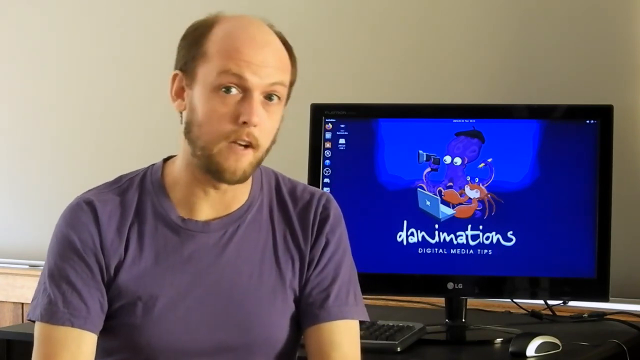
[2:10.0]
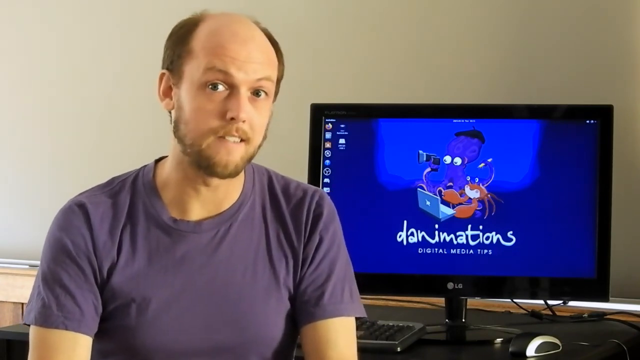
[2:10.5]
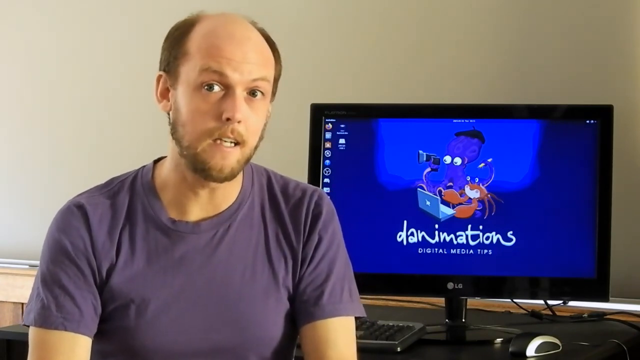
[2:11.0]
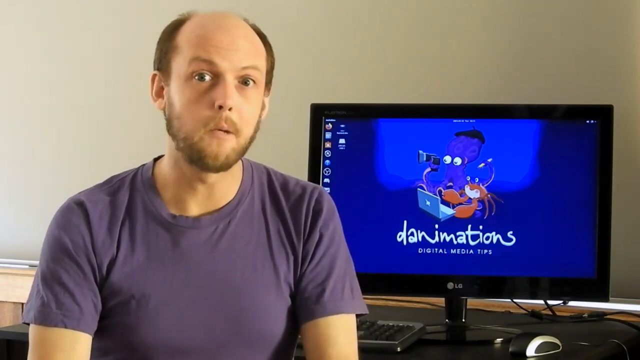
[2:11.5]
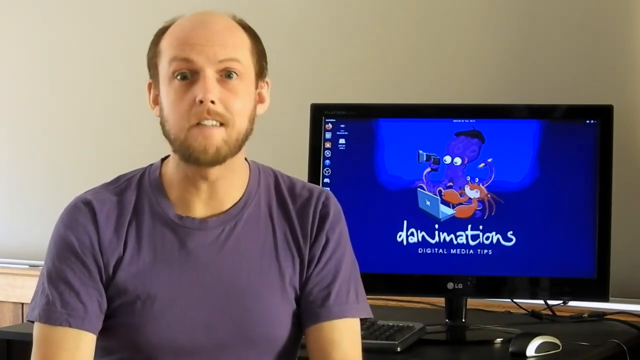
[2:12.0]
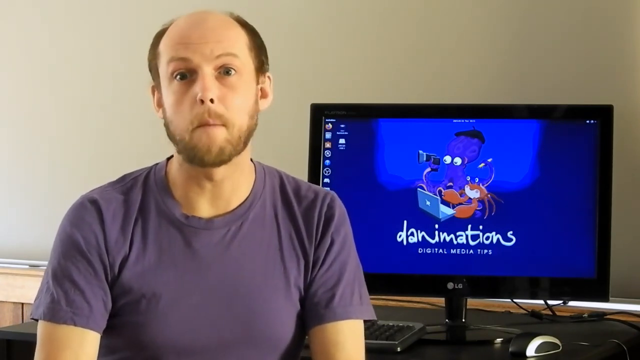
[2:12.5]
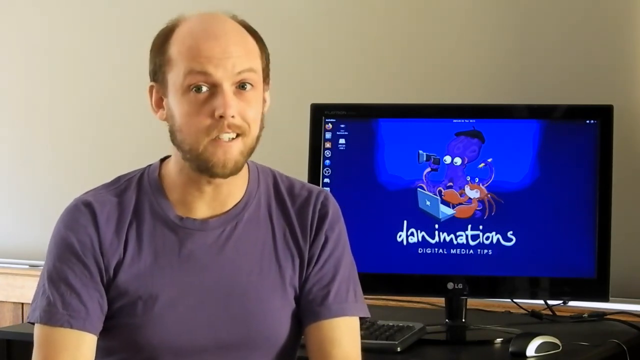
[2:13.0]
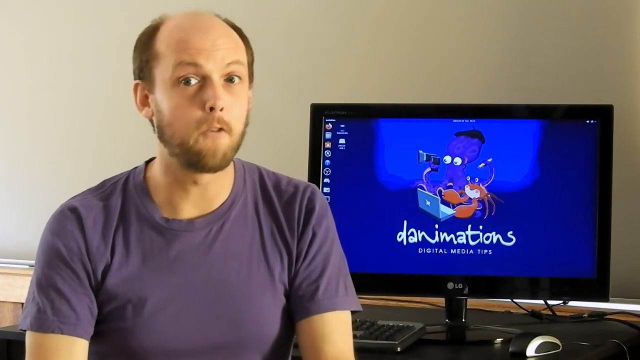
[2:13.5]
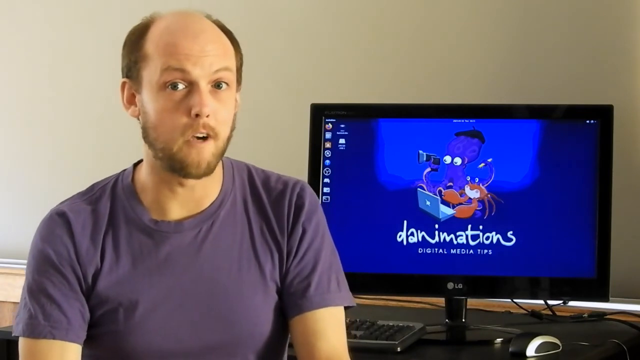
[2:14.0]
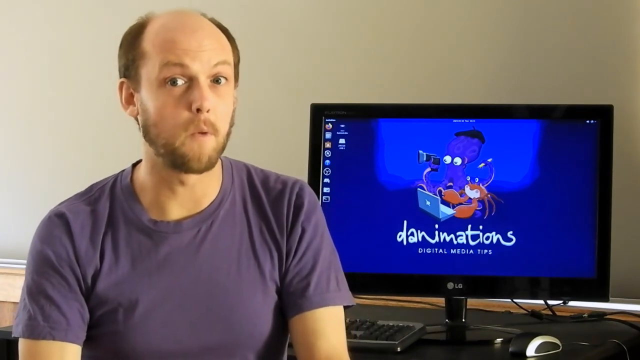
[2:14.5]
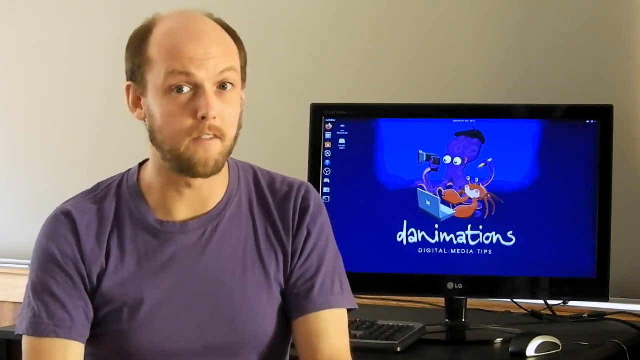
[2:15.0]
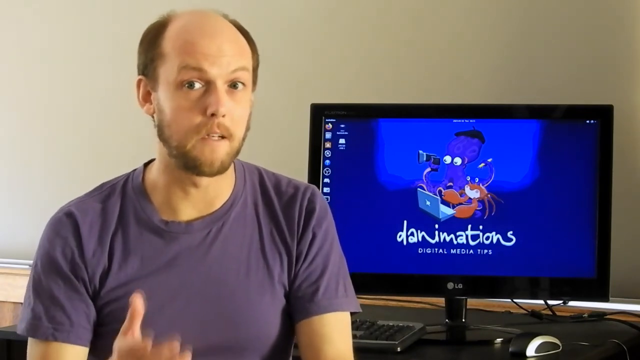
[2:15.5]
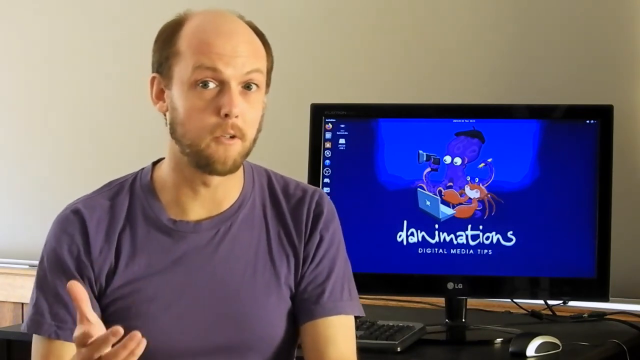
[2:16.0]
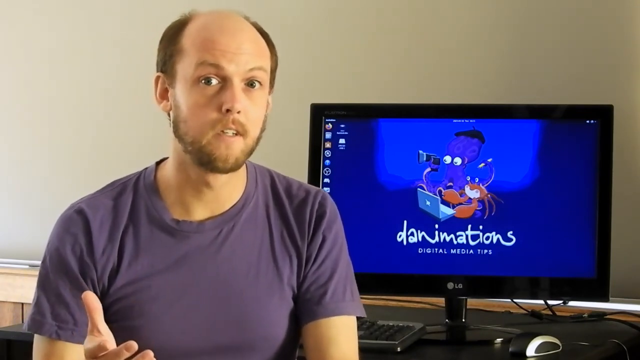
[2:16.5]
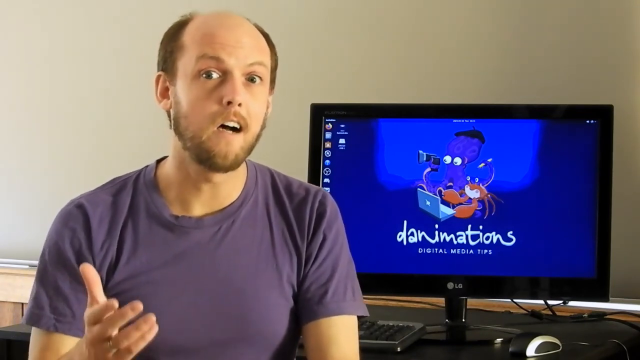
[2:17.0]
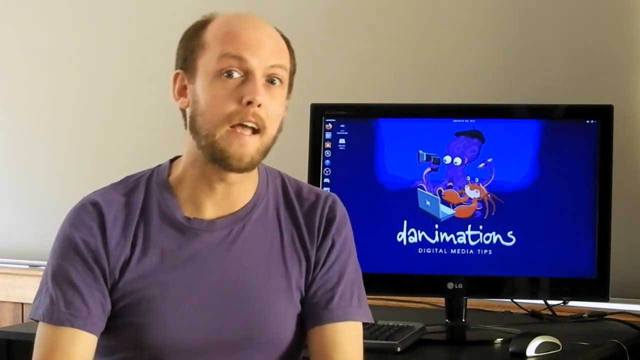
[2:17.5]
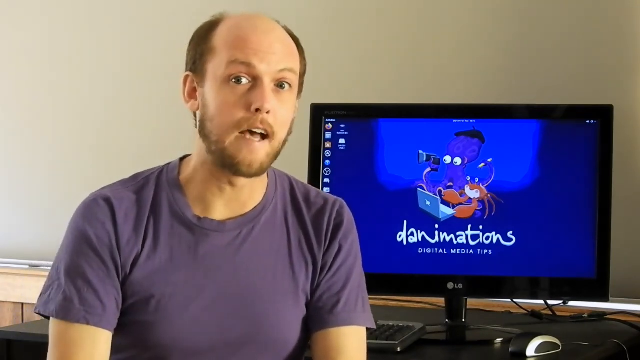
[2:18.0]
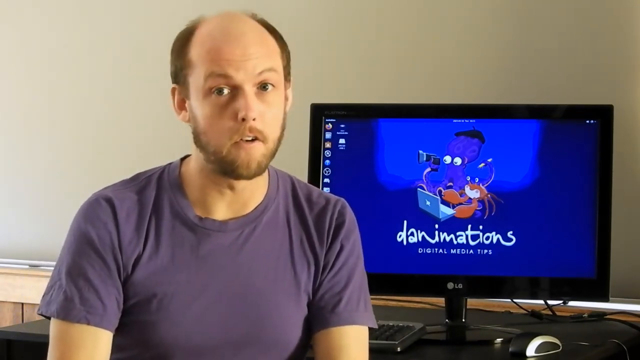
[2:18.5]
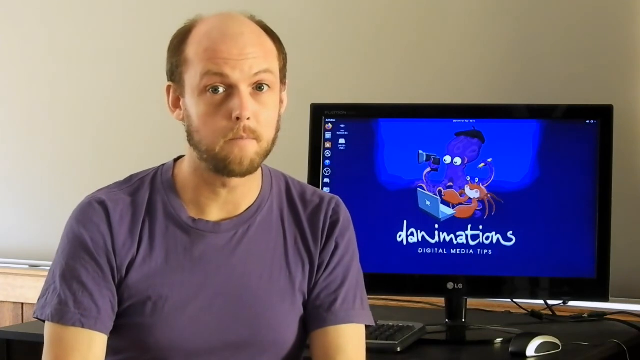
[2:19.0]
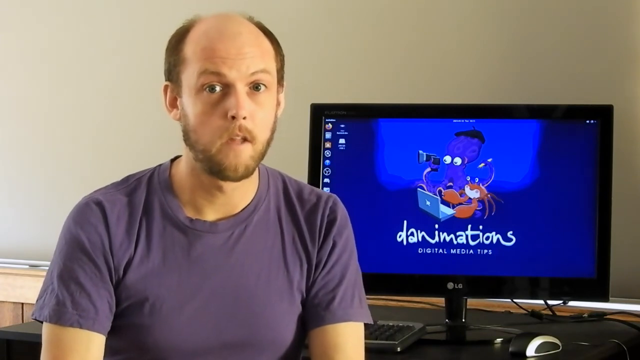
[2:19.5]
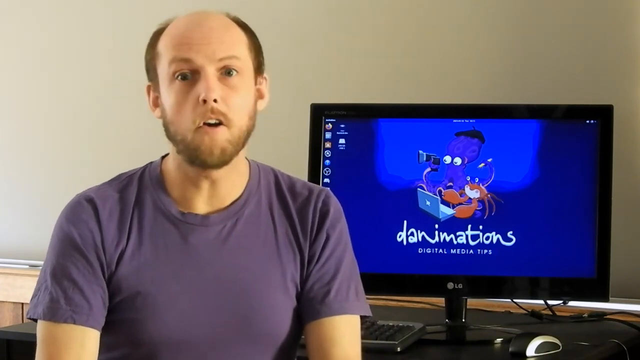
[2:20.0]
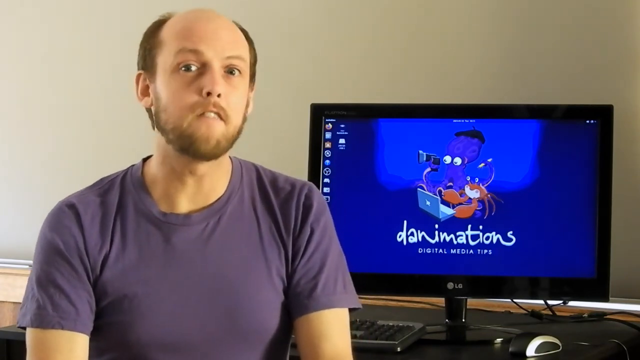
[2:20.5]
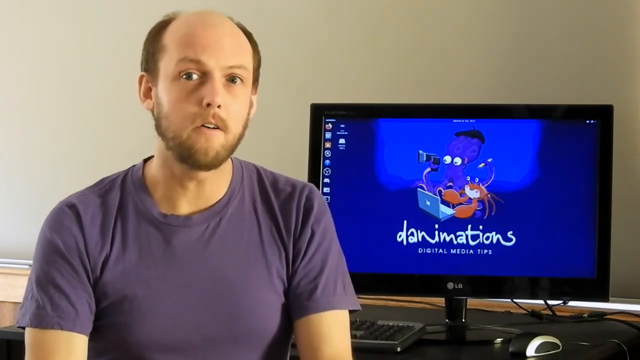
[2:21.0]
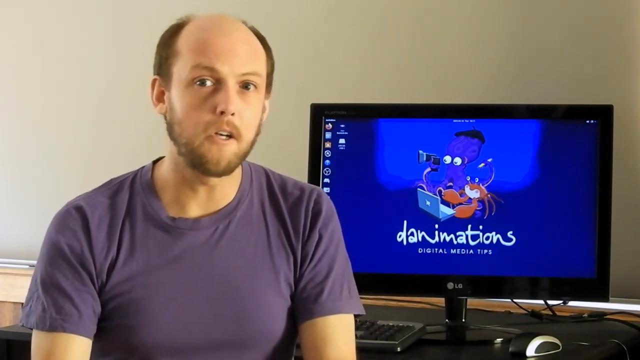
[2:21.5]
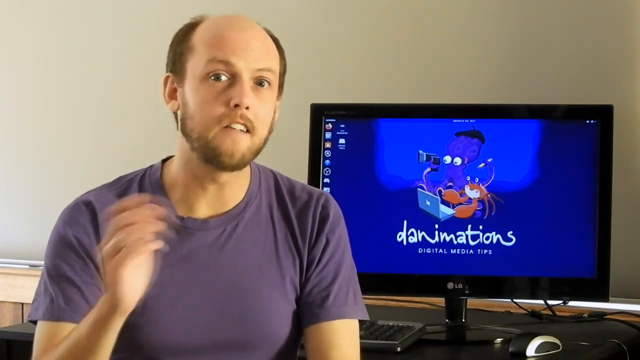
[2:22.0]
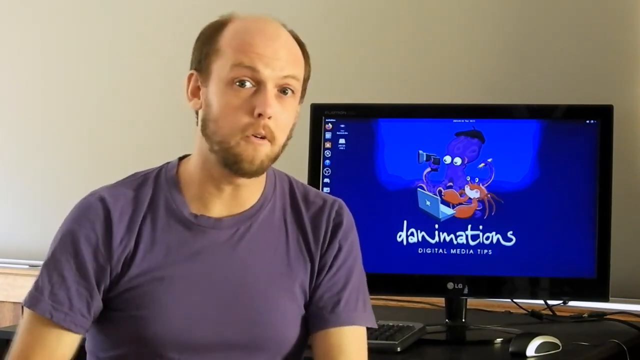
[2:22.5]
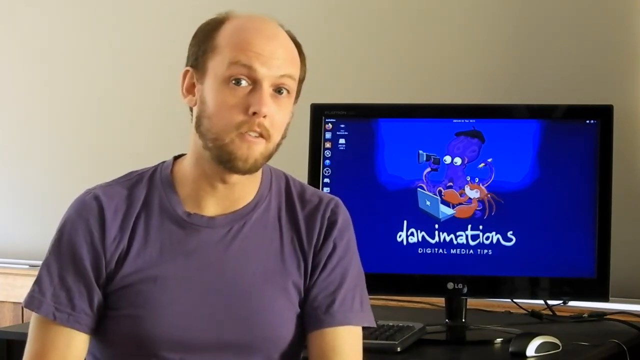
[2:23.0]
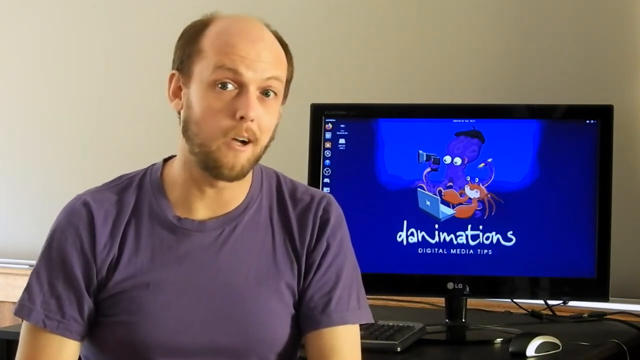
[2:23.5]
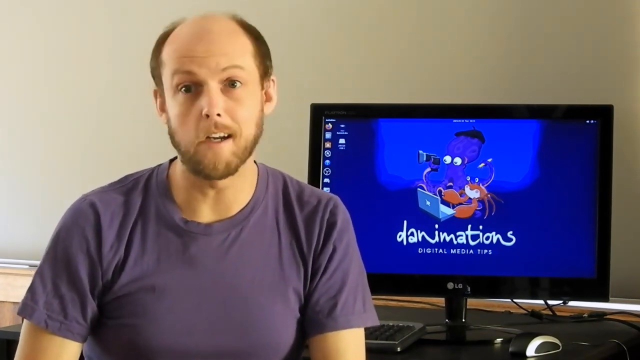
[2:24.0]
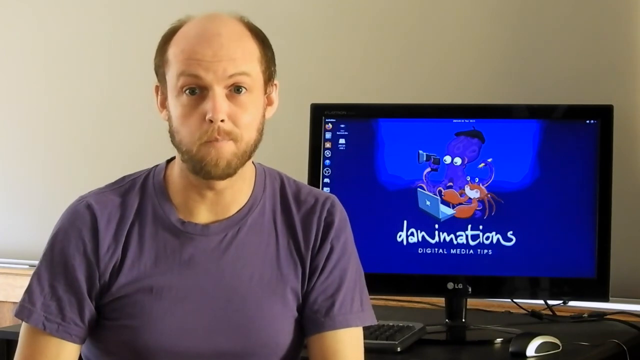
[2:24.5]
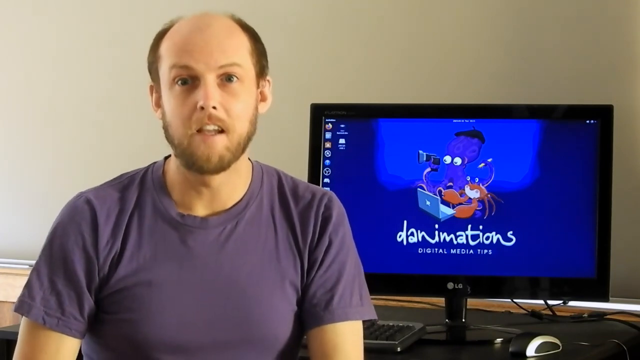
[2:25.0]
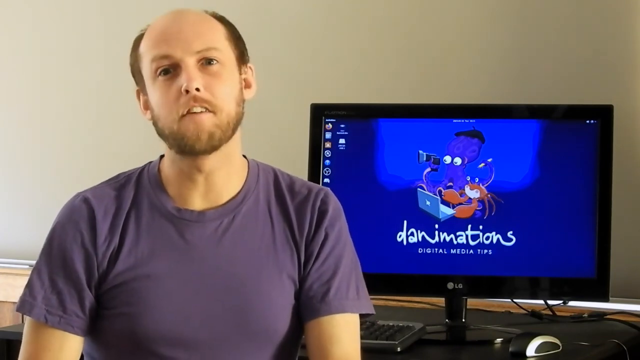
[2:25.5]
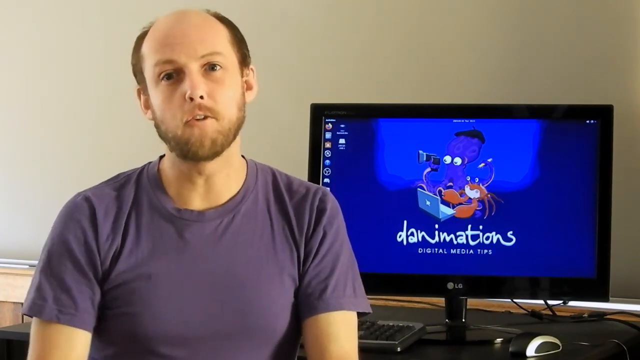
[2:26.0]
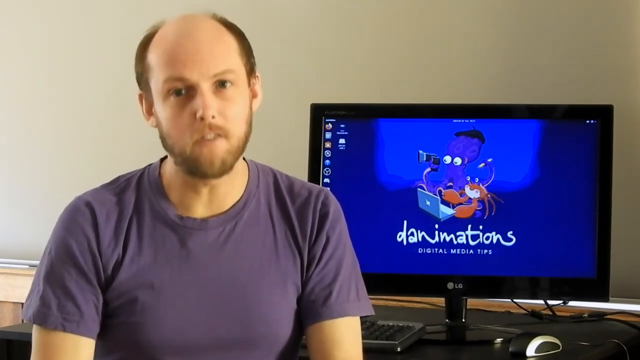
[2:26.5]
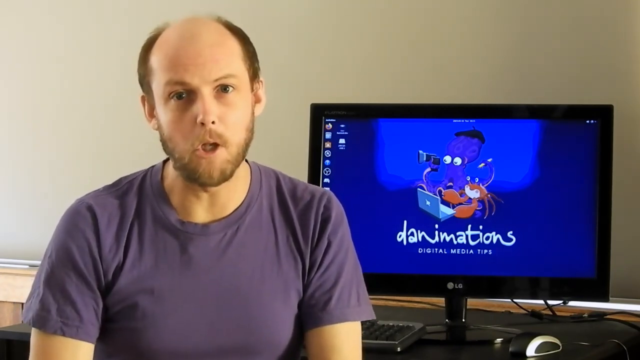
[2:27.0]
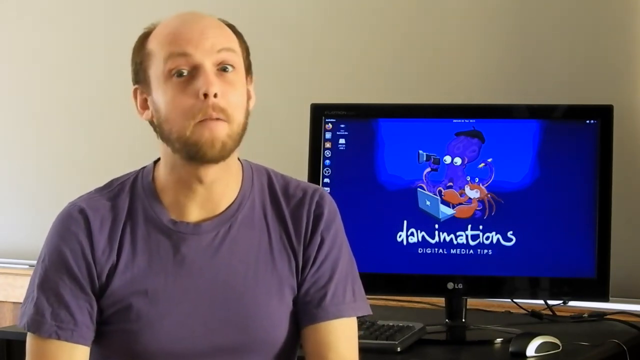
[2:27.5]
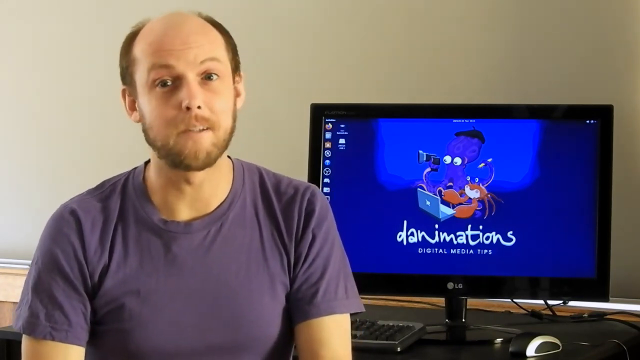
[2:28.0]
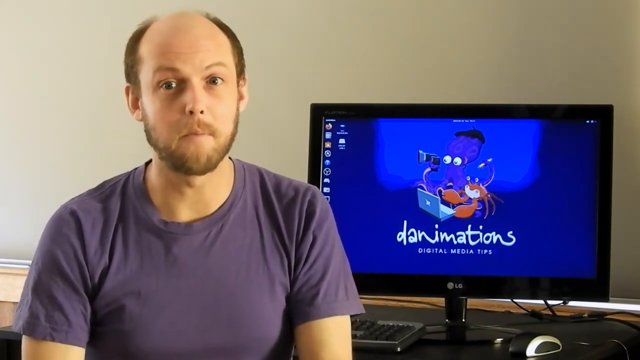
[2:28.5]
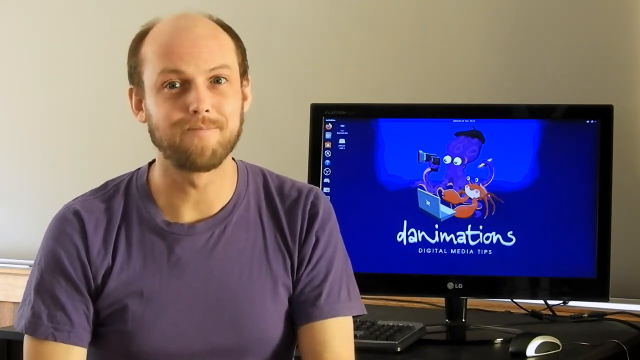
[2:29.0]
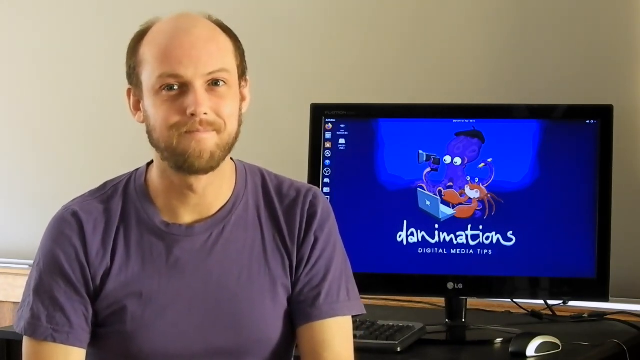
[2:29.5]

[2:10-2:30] A man on the left faces the viewer, visible from the chest up. He is white, wears a purple T-shirt, has brownish-red hair, is bald in the front and has a beard. He actively talks, making hand gestures every once in a while, mainly with his right hand, which pops up now and then. His expression is fairly neutral, maybe with a slight grin. He has brown eyes, and his hair is about medium length overall. In the background on the right is a computer monitor with a black bezel and a blue background showing two animated characters, a squid and a crab, in the center, facing the lower left with a camera and a laptop. Below them, white text says "Danimations," and on the left side of the monitor several icons are aligned vertically. A tan wall is behind him, and the monitor rests on a brown surface, likely a table or floor.